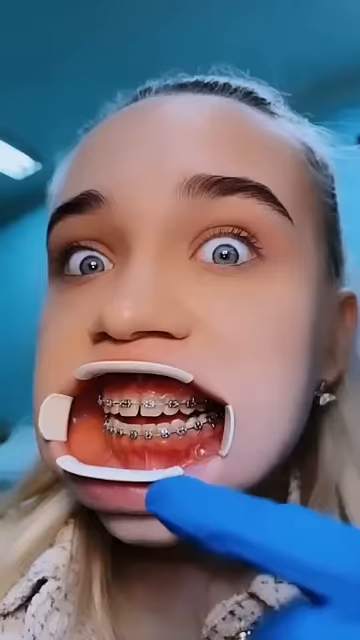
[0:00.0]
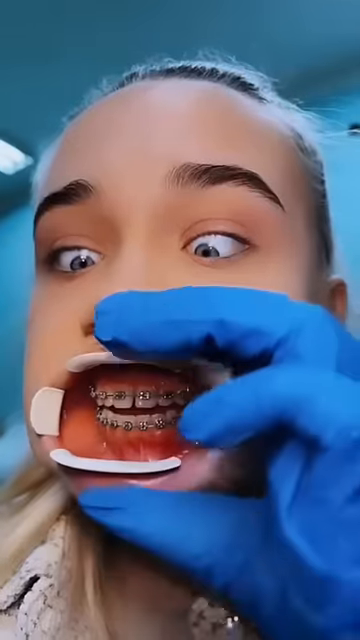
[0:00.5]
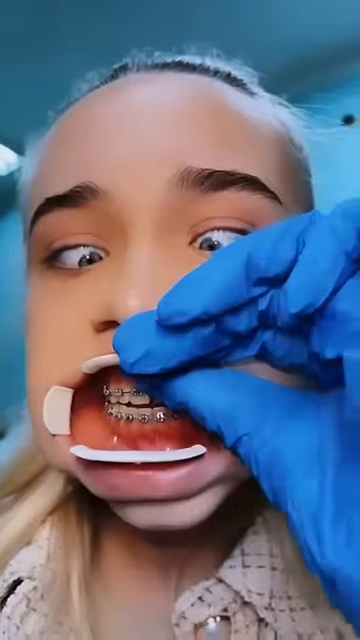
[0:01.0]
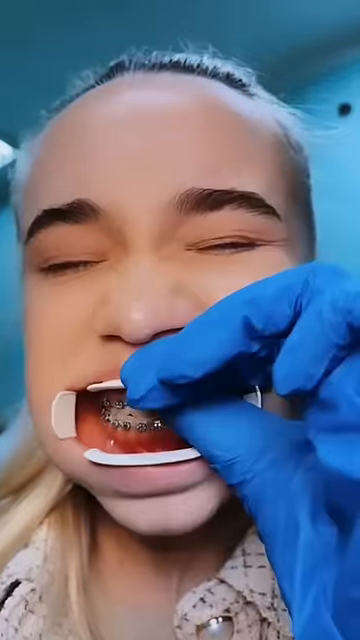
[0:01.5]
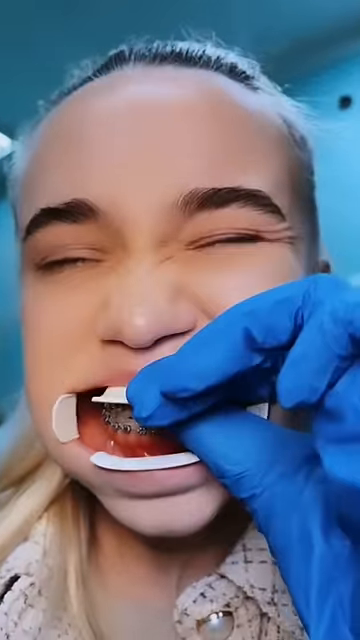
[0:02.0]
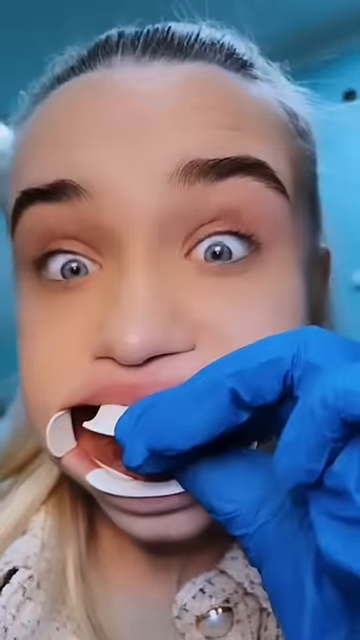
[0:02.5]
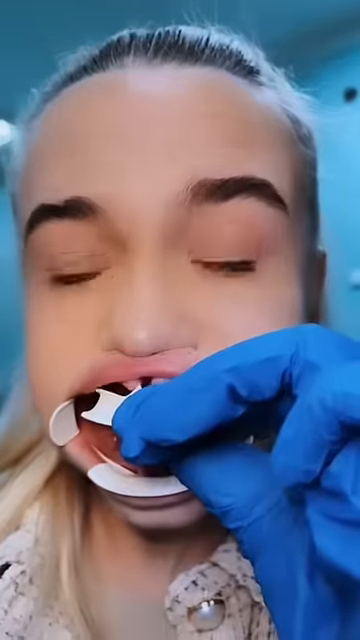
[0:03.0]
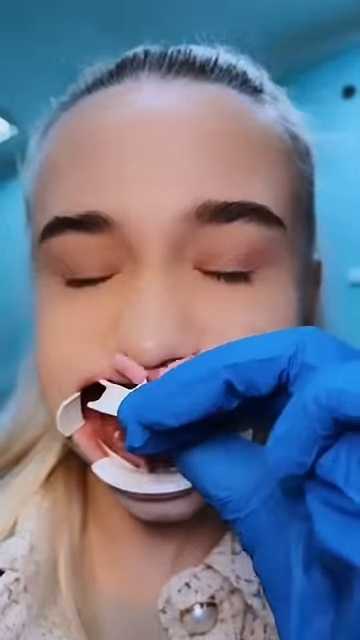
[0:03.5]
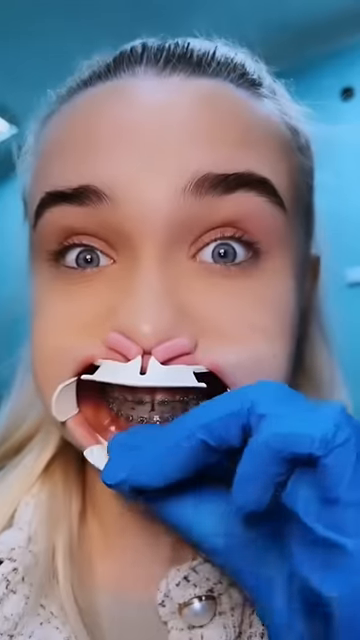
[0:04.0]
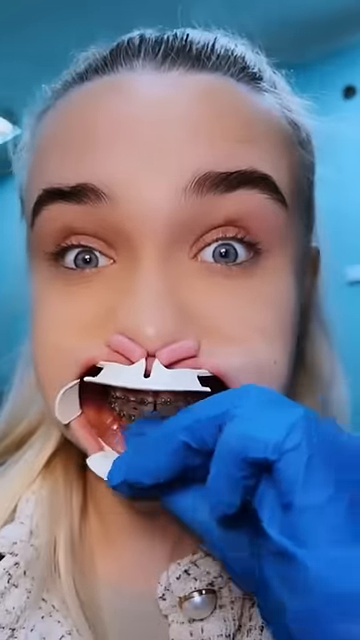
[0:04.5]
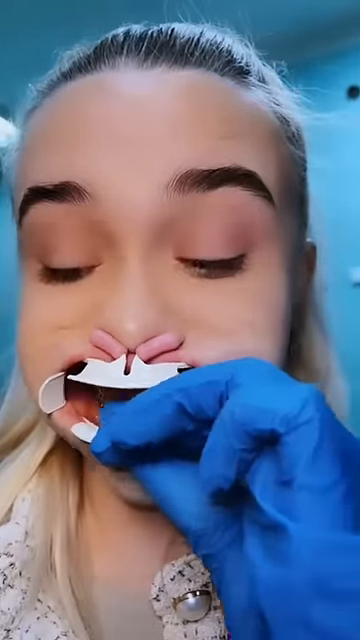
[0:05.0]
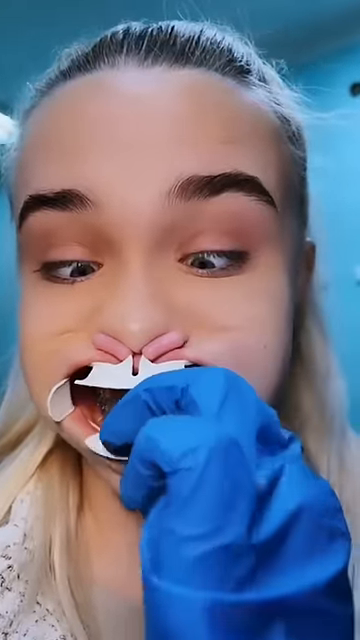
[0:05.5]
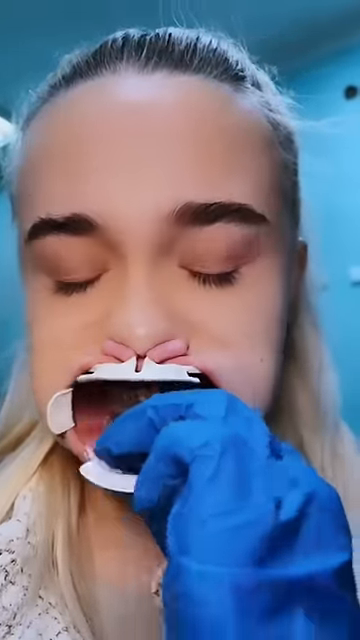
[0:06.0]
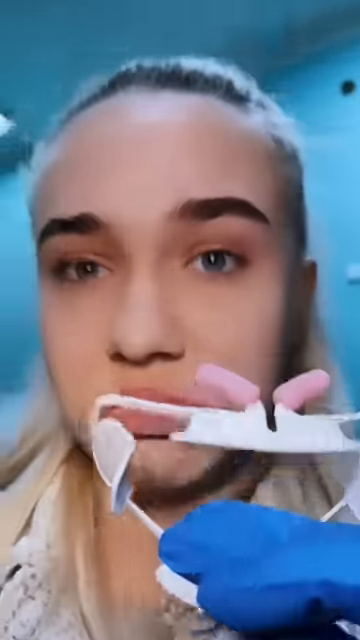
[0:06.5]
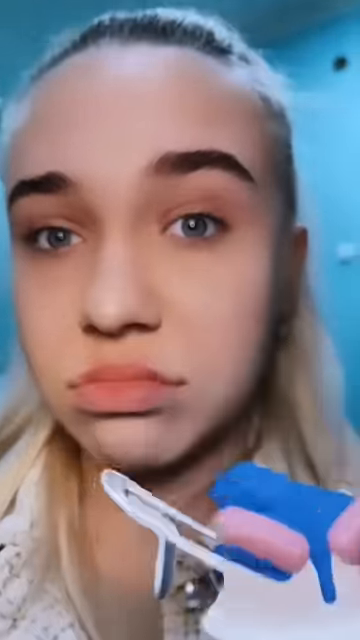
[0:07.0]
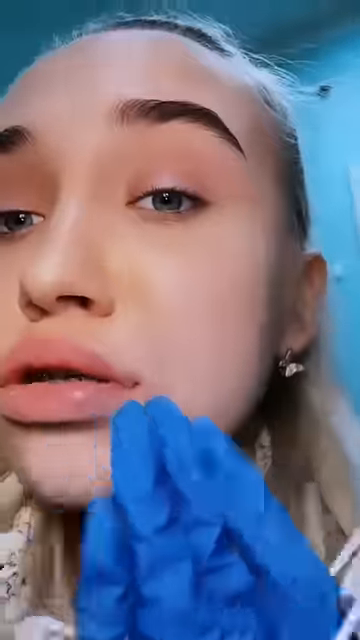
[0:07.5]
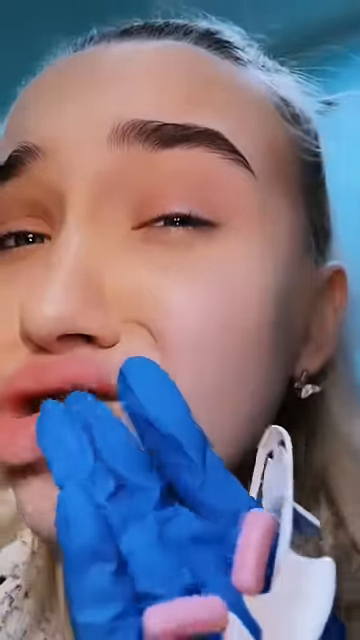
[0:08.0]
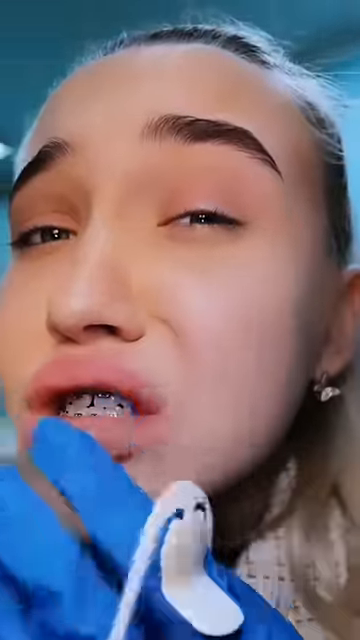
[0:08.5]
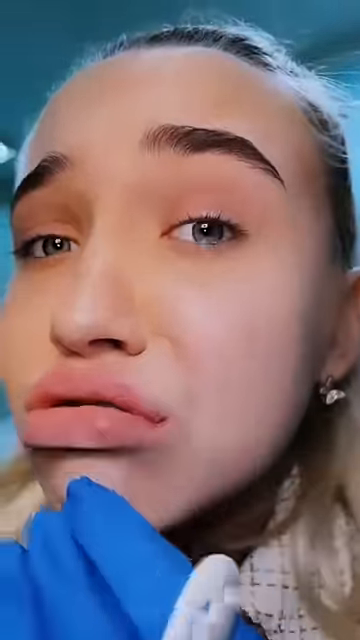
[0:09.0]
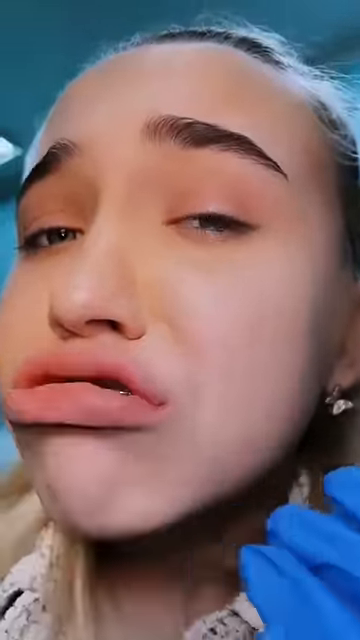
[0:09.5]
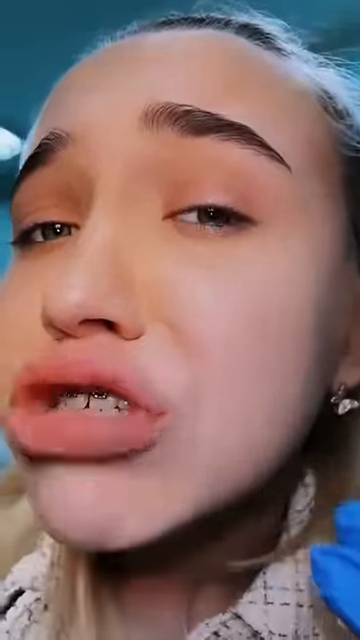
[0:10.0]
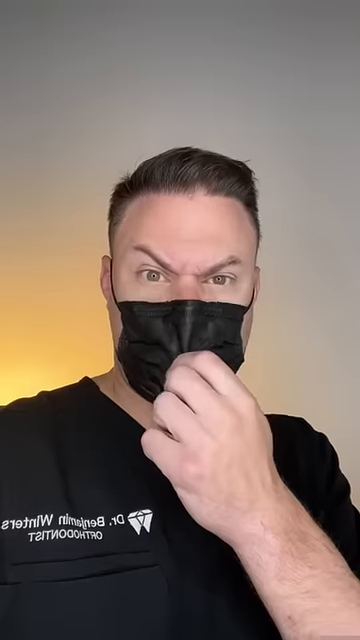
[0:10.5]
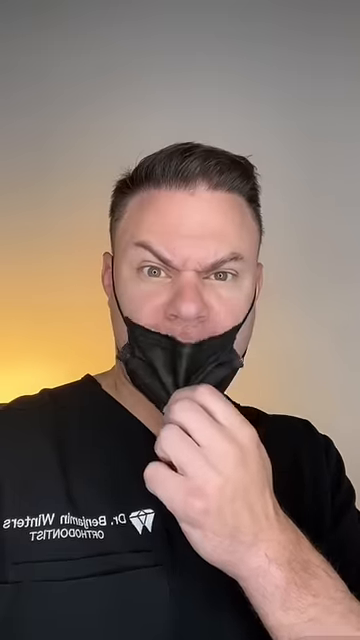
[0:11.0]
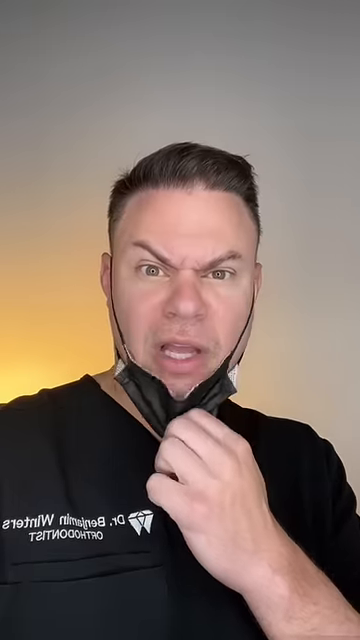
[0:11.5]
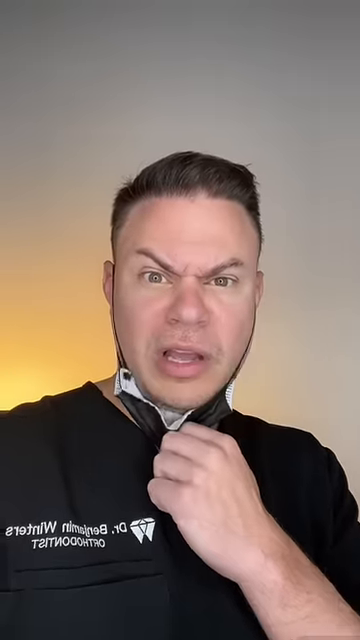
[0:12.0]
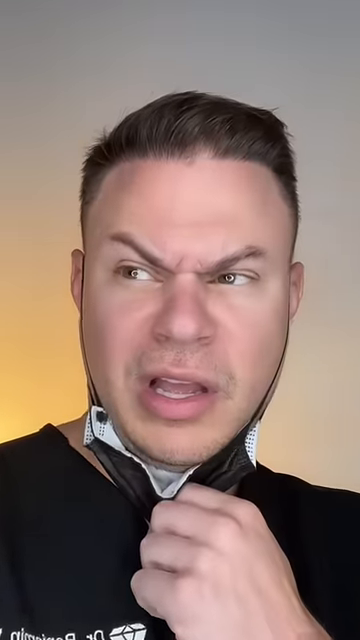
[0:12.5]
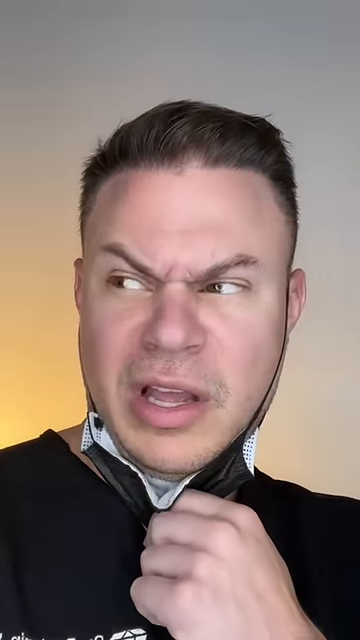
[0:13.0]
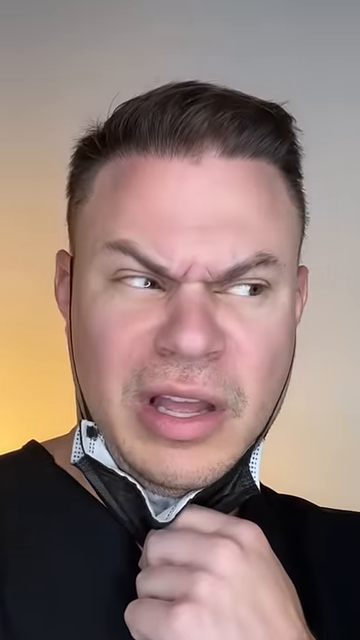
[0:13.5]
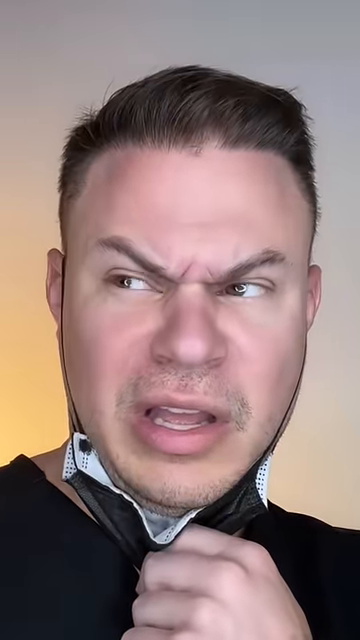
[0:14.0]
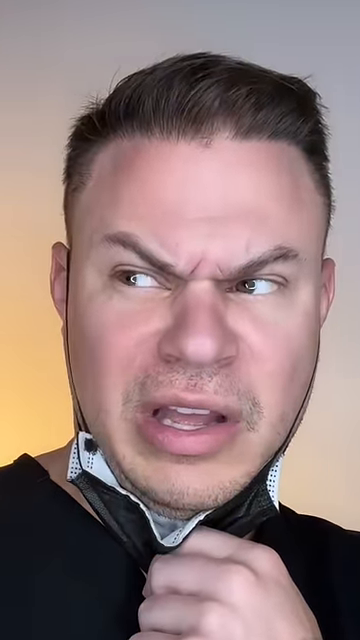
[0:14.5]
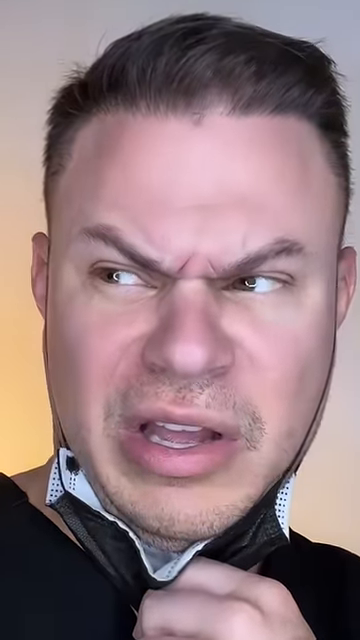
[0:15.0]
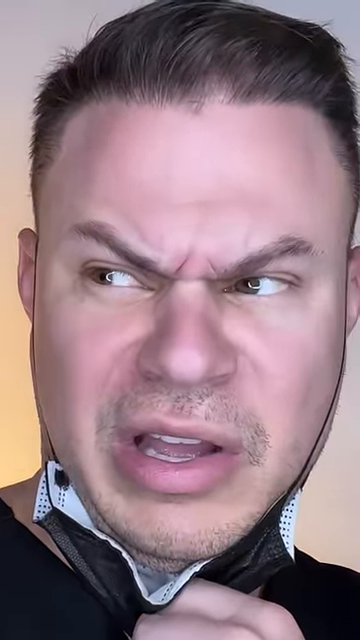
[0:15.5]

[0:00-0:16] A young female wearing a blue glove pulls at something in her mouth that looks like two white tabs; she has braces. Once she pulls hard enough, the device comes out, and she then opens her mouth, showing the braces still sort of settled. A doctor then appears on screen wearing a black mask, pulls it down, and makes a very reactionary, surprised and shocked face with eyebrows pointed down, looking confused and shocked at what was just seen. The camera zooms in. The background is beige and yellow, in what looks like a small room, very zoomed in. The doctor wears a black shirt with a dental logo and appears very surprised. The man is possibly in his 40s or 50s.